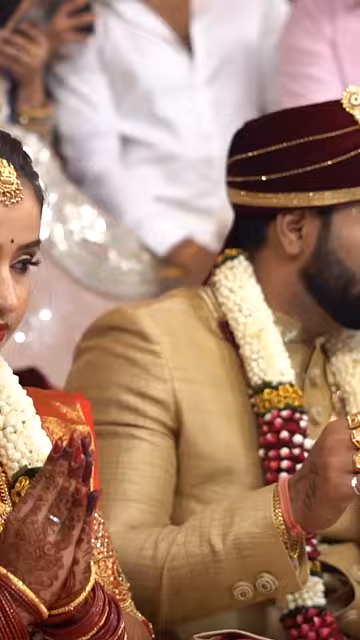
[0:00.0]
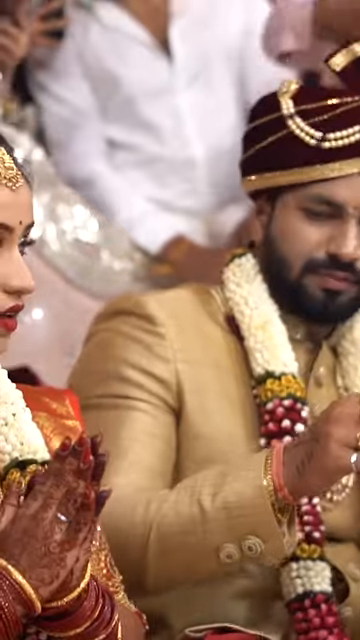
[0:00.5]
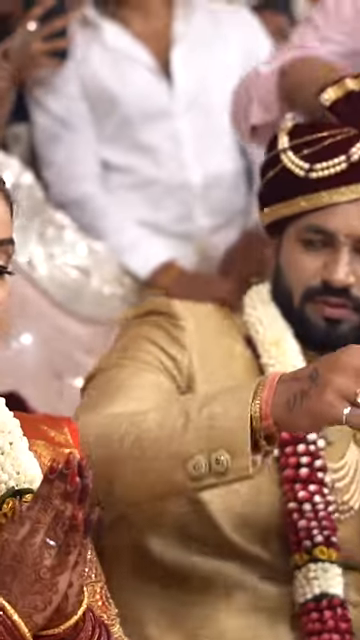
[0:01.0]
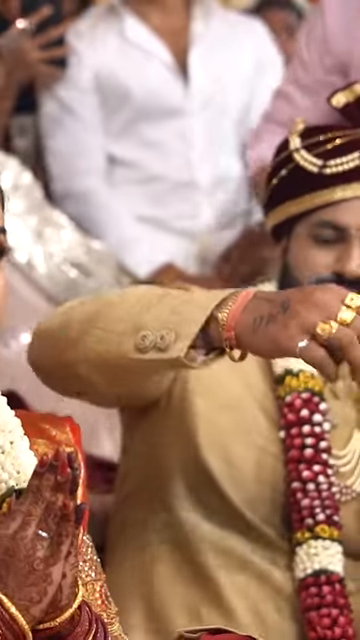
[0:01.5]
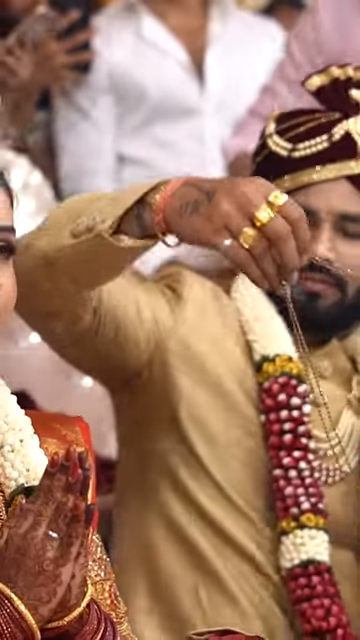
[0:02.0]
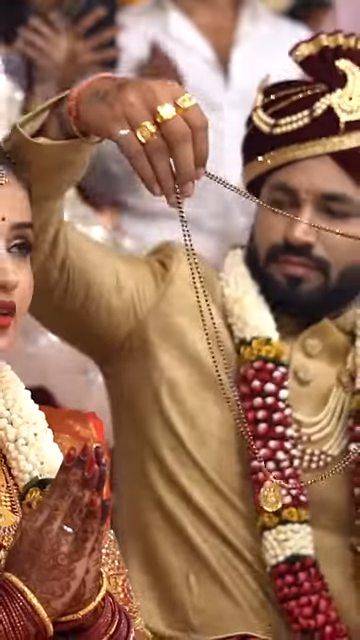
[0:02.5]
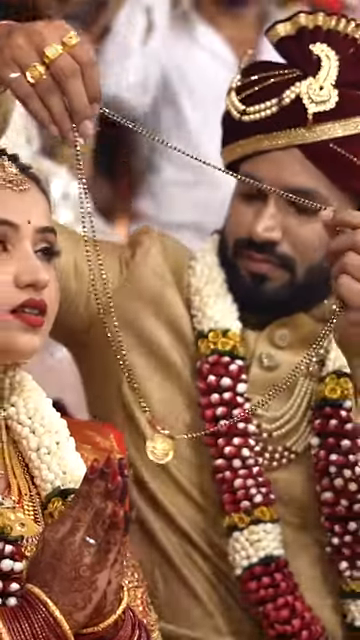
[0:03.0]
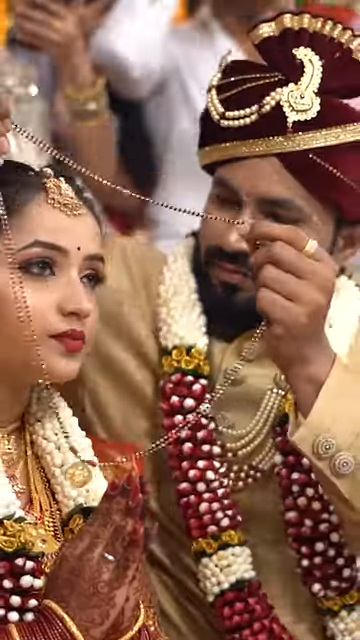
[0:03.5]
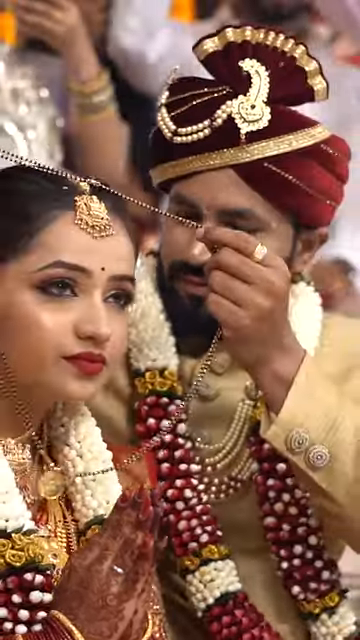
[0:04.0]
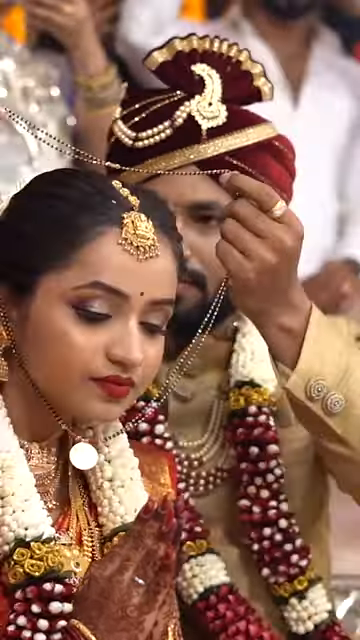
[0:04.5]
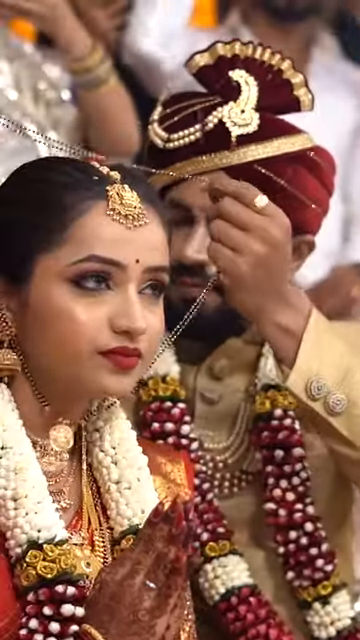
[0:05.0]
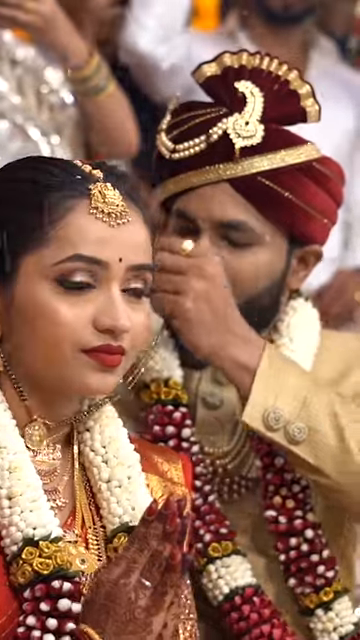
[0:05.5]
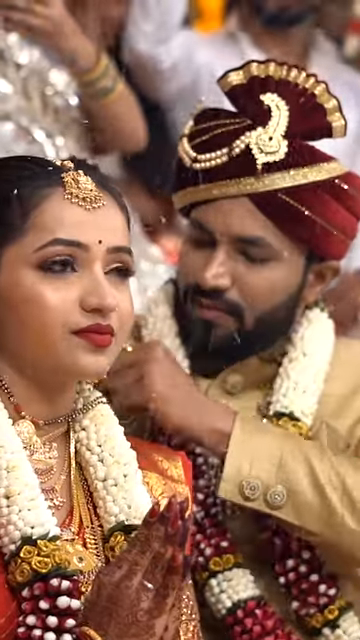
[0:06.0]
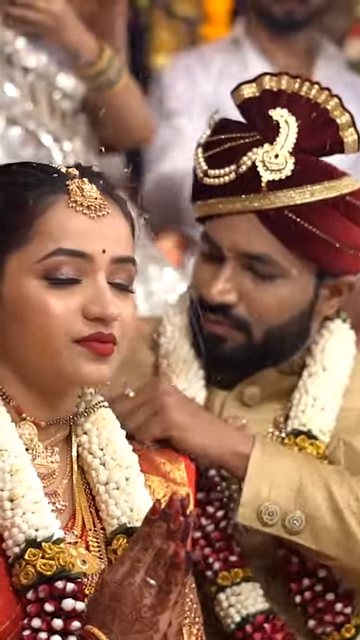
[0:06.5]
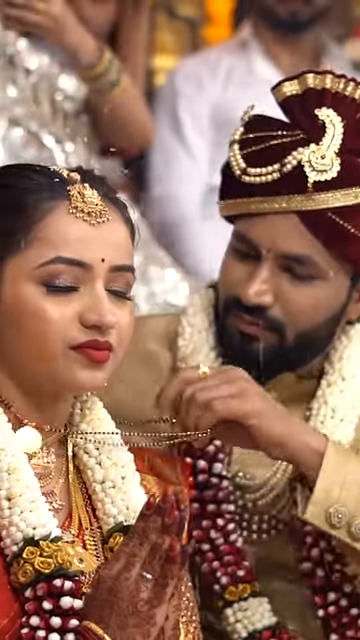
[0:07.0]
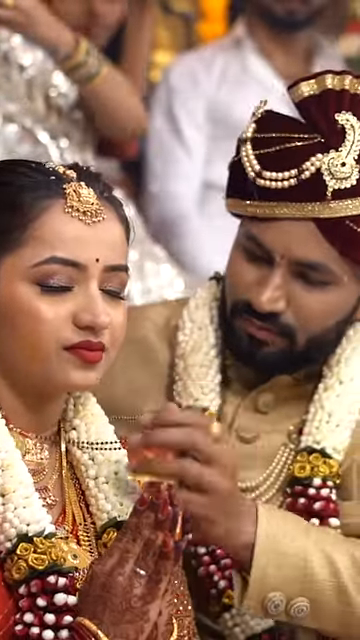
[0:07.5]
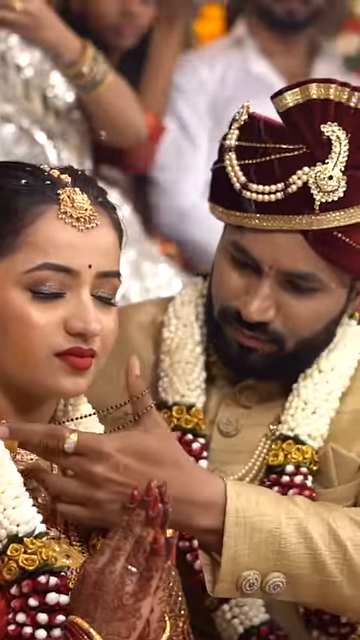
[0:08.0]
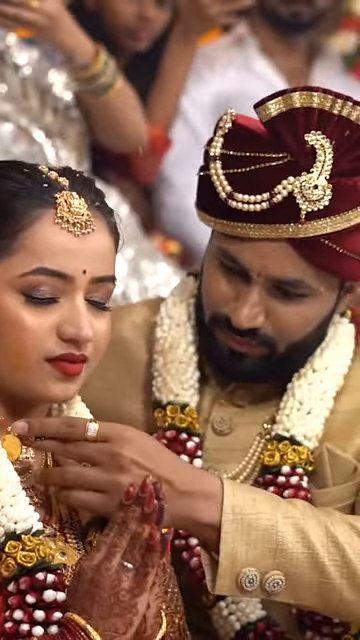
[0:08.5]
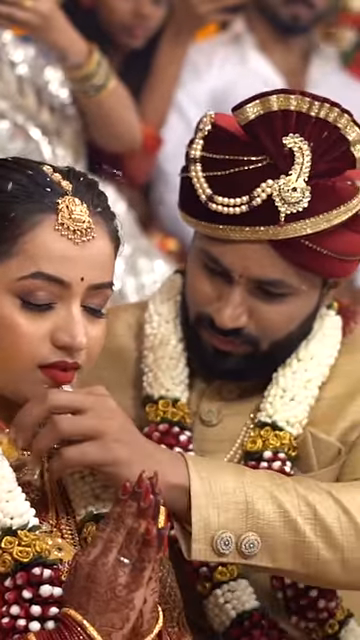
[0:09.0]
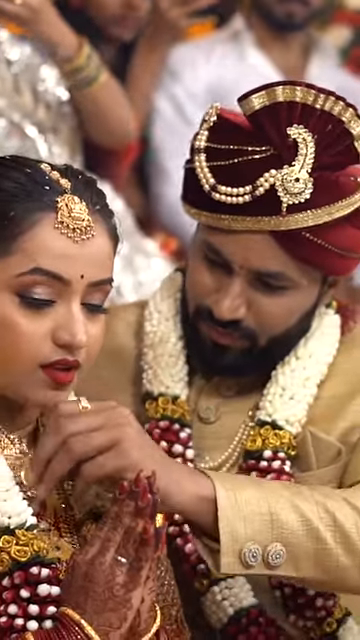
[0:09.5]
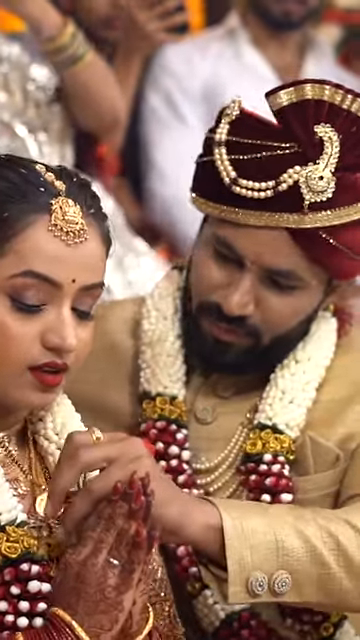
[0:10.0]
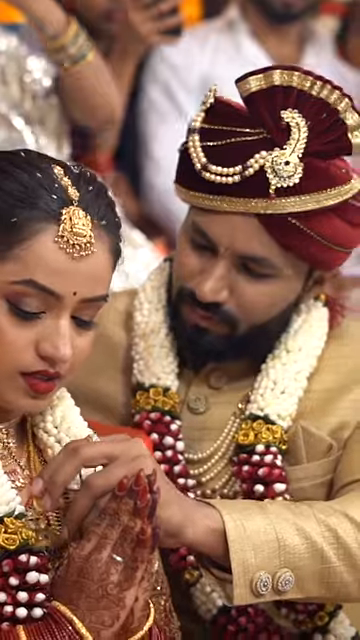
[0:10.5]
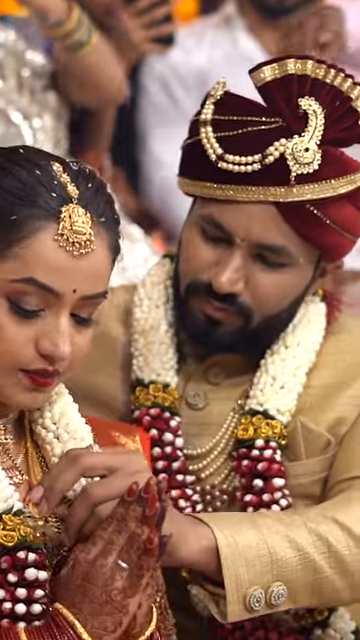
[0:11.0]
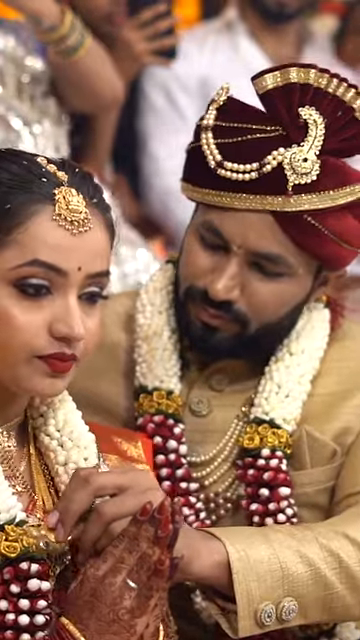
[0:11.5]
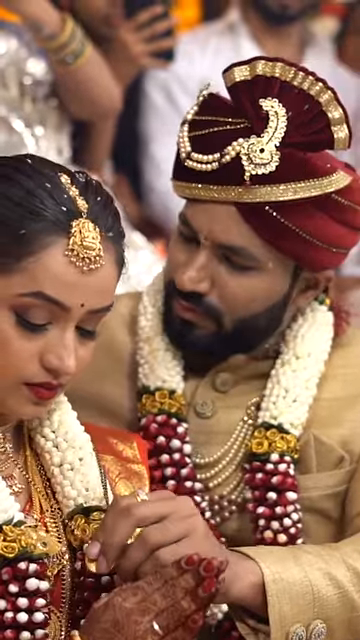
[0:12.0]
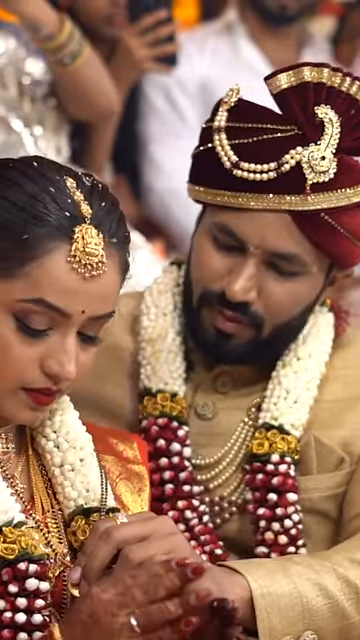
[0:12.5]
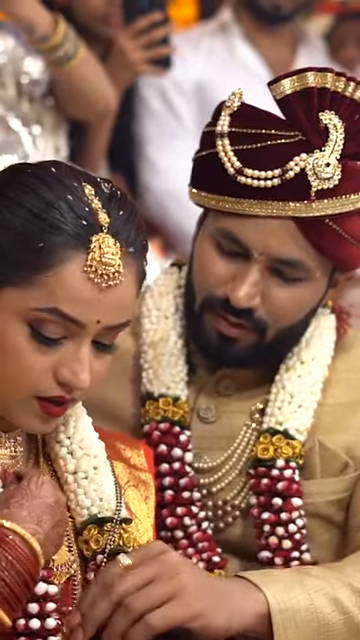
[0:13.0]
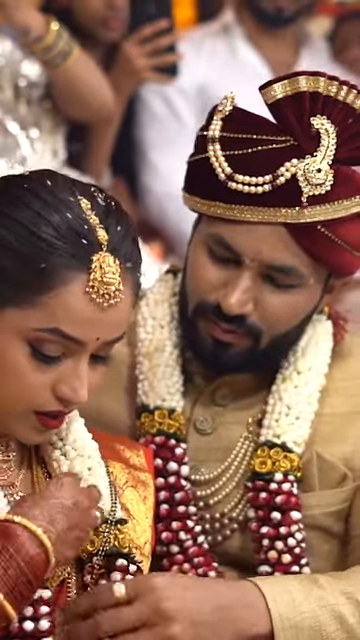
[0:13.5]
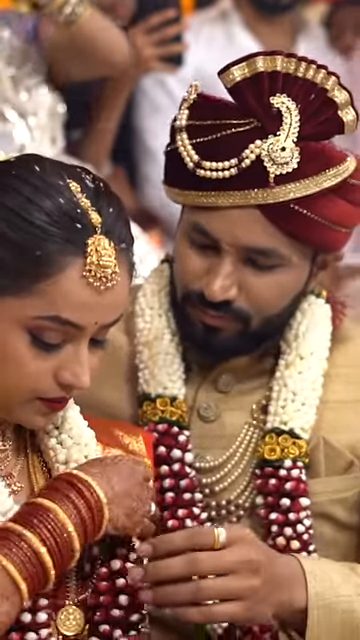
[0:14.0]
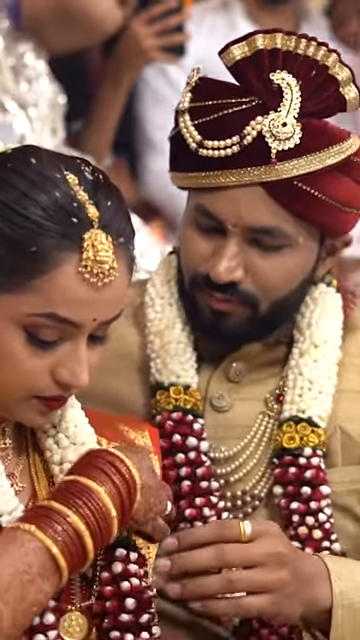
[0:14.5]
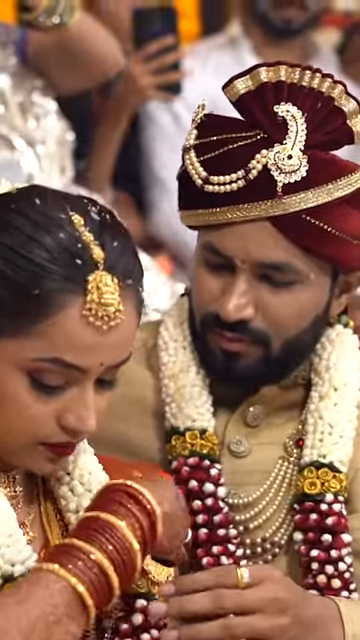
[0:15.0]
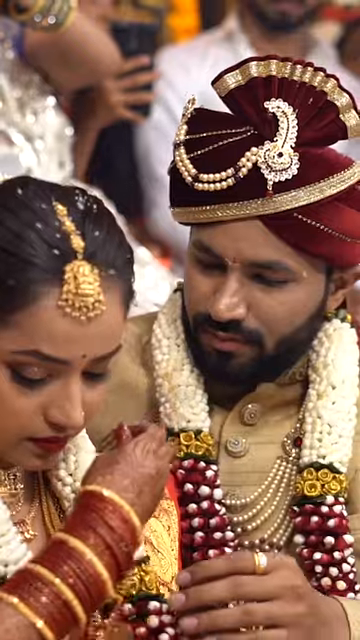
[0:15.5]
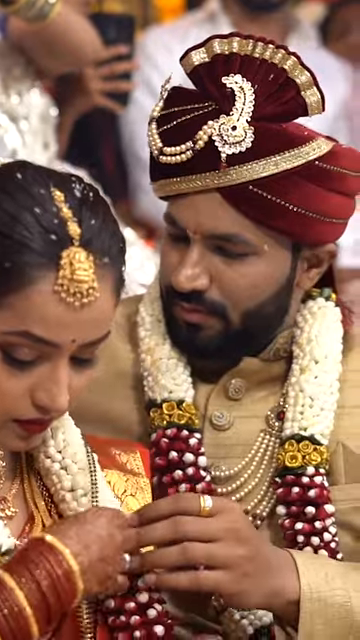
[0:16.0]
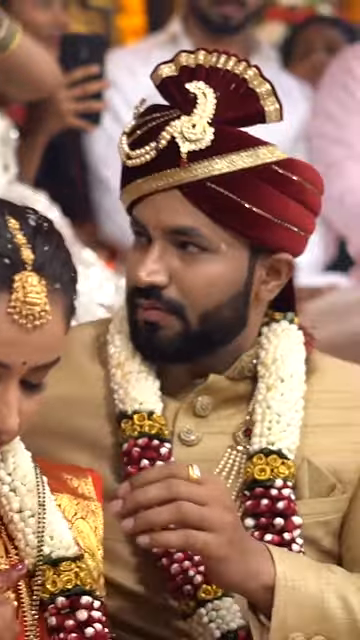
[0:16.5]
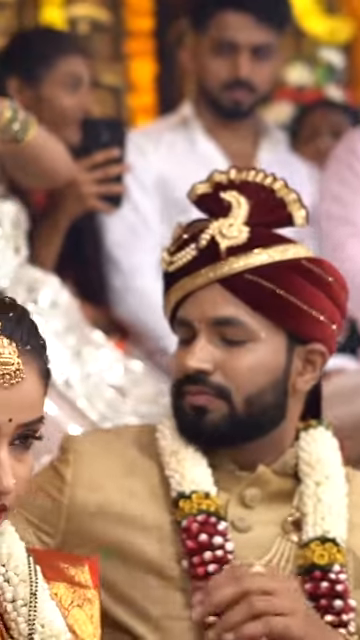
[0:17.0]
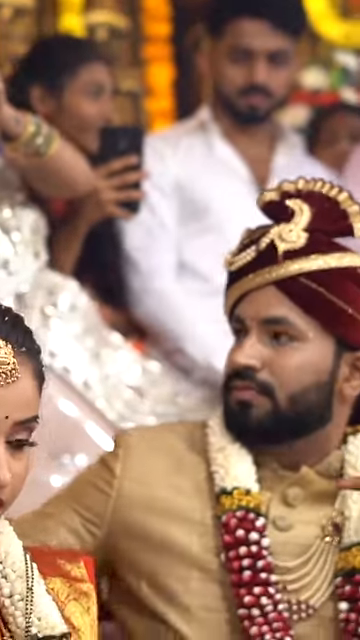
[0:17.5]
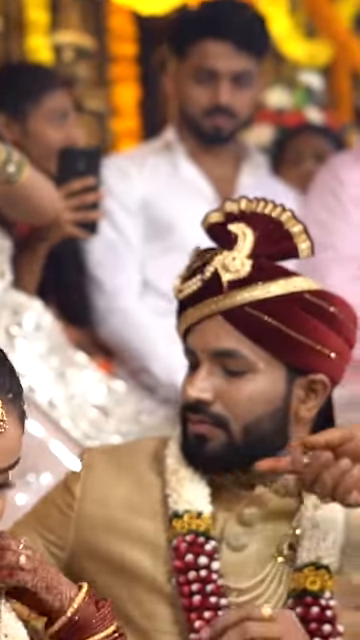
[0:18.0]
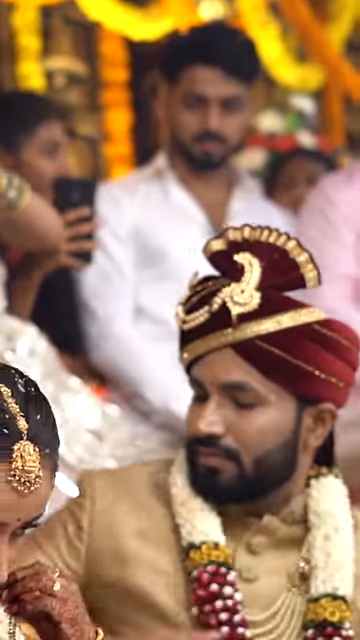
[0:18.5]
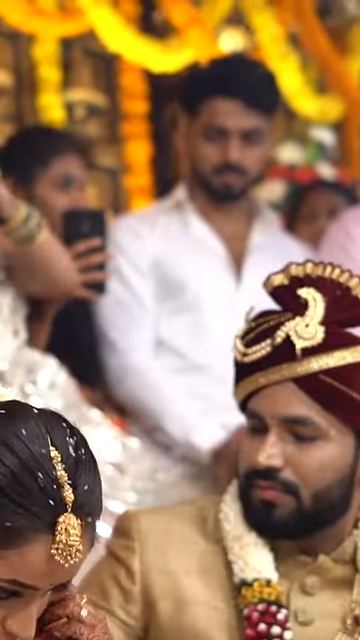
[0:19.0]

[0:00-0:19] The video shows a North Indian, South Indian wedding with a bride and groom. Both wear thick necklaces. The groom wears a red hat with gold on it and a gold suit, and he has many different gold rings on his fingers. The bride has a hair or head adornment of sorts at the top of her forehead, a thick necklace, and lots of bracelets on her arms, and she appears to be wearing a red wedding dress. In what looks like a tradition, he puts a necklace around her neck, maybe as a gift for his bride. She does not look happy at all; she looks as if she wants to be anywhere but there and her heart is hurting, possibly because this is an arranged marriage. She doesn't smile at all and looks very uncomfortable. People around them look on as he puts the necklace around her neck.